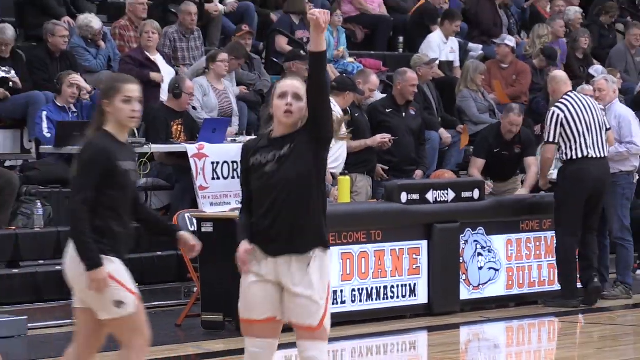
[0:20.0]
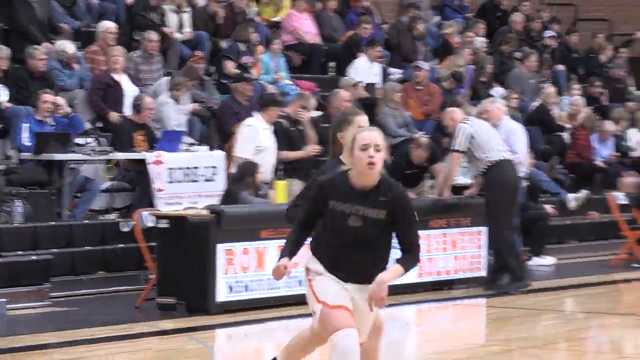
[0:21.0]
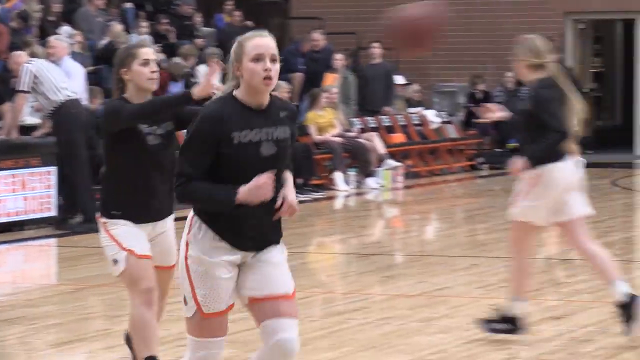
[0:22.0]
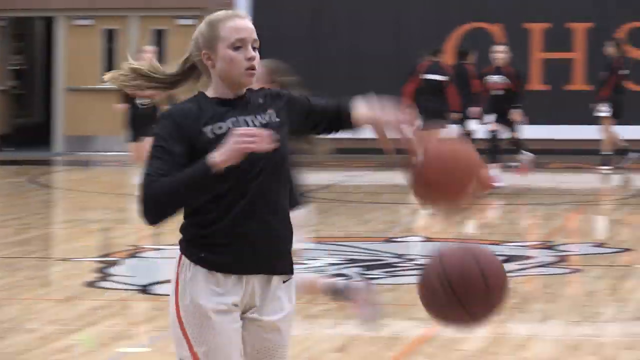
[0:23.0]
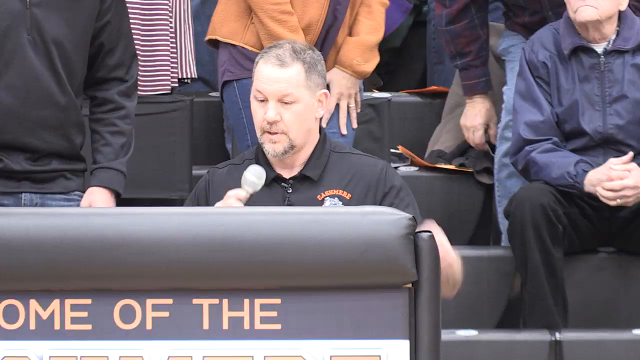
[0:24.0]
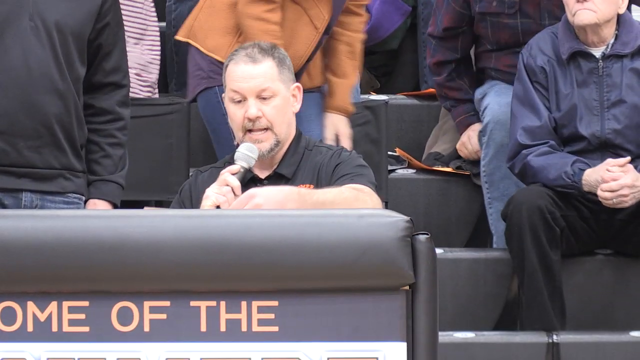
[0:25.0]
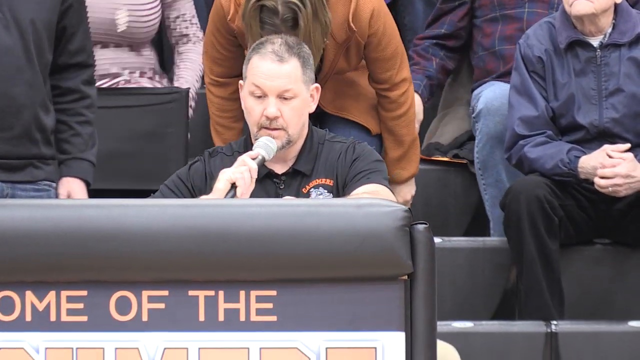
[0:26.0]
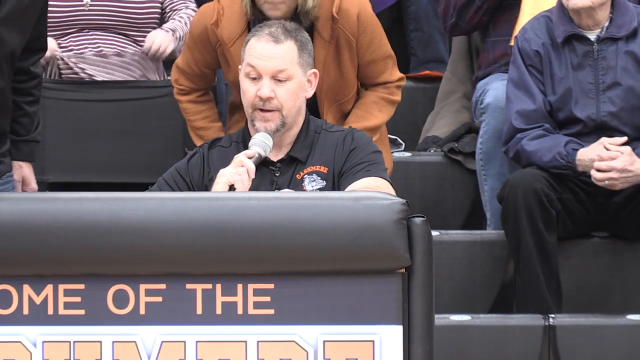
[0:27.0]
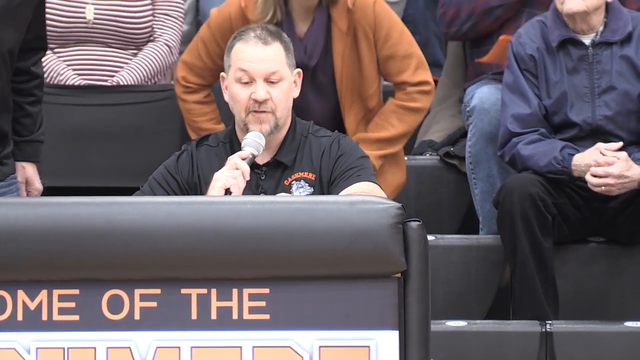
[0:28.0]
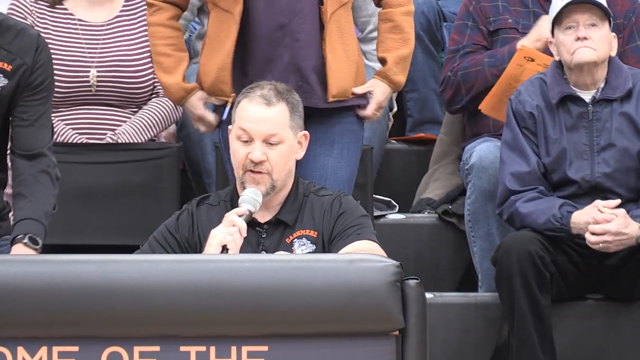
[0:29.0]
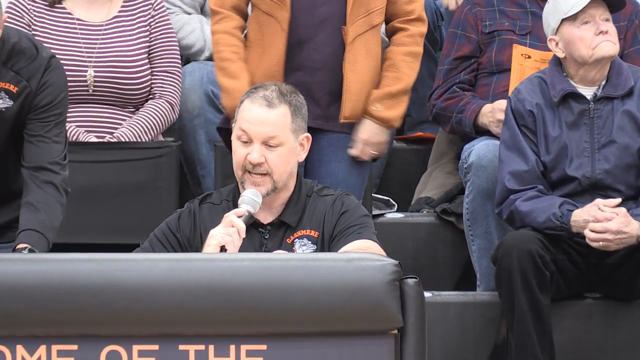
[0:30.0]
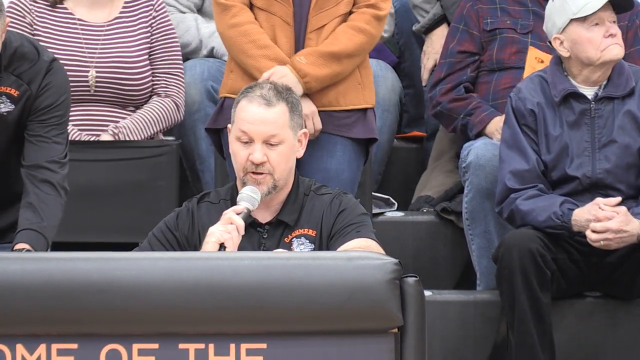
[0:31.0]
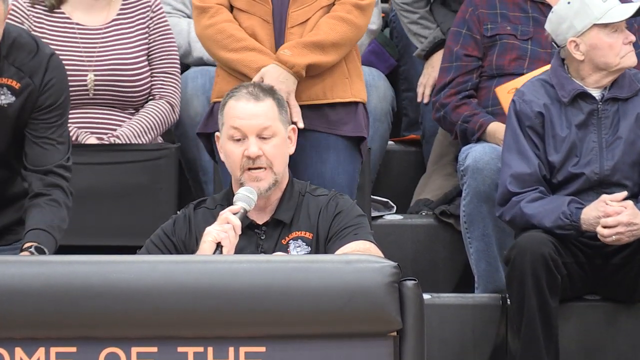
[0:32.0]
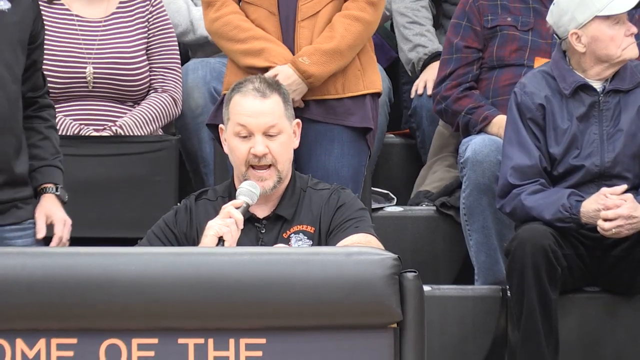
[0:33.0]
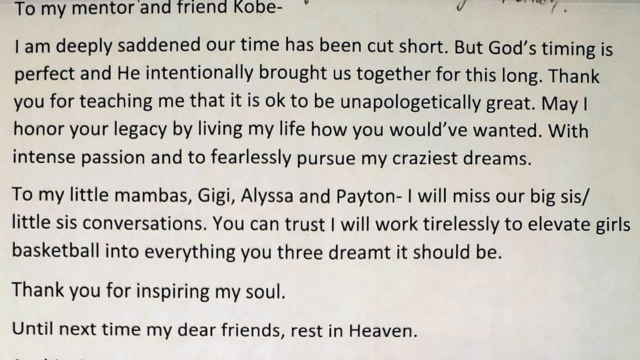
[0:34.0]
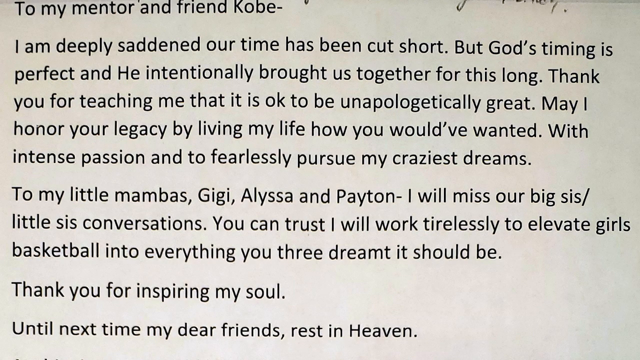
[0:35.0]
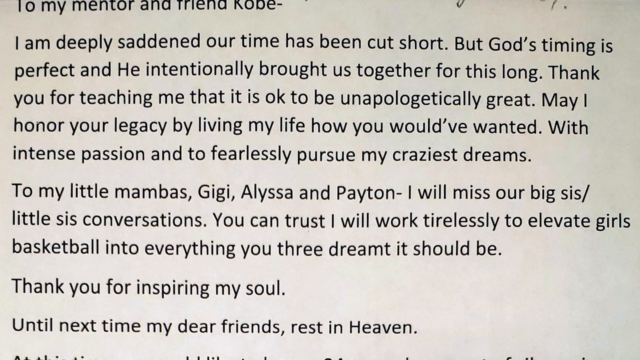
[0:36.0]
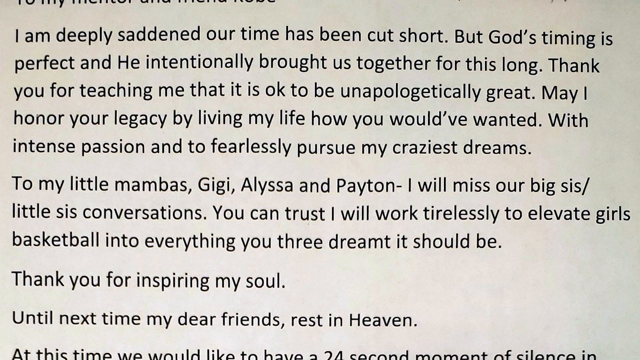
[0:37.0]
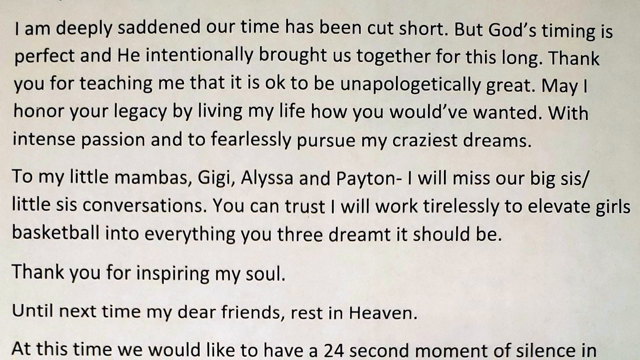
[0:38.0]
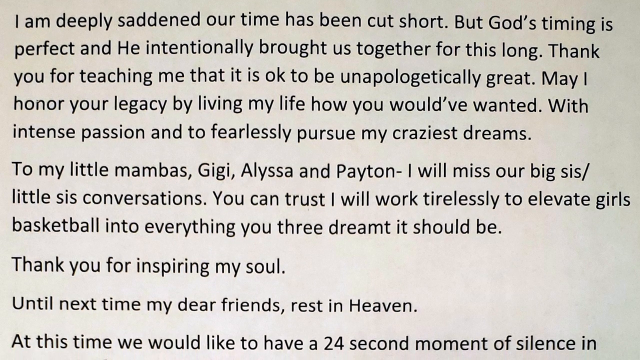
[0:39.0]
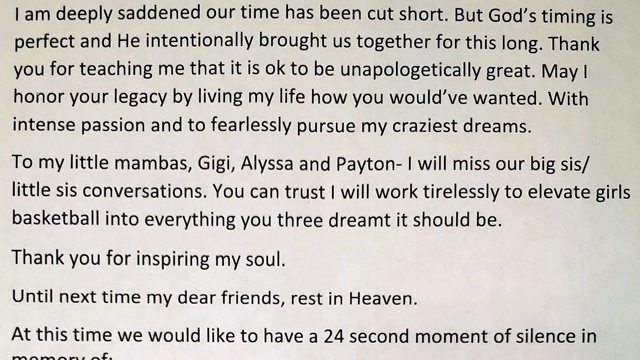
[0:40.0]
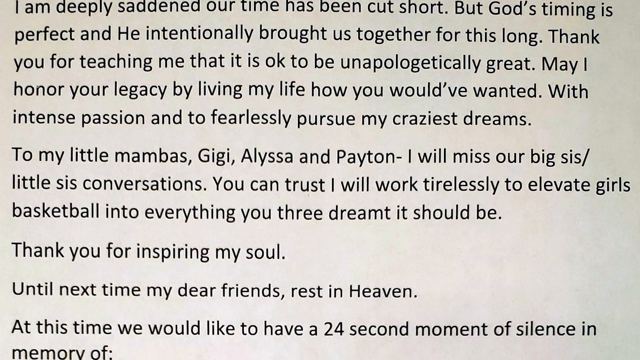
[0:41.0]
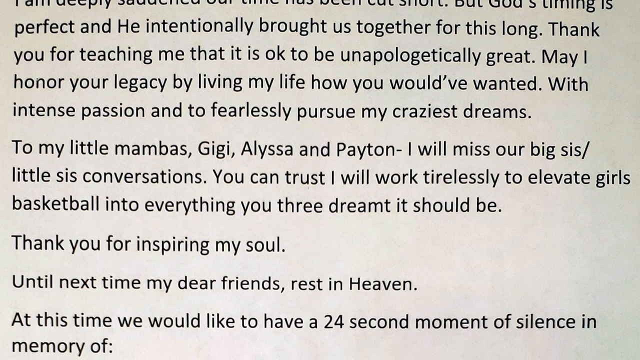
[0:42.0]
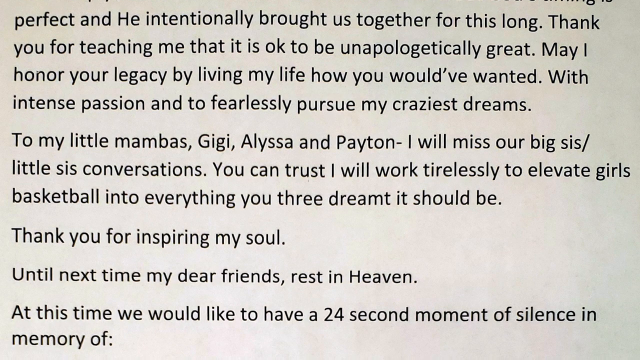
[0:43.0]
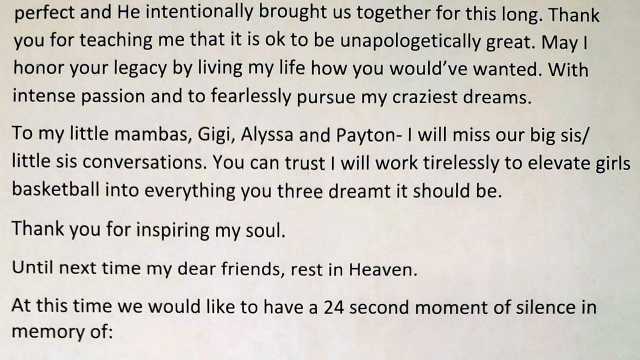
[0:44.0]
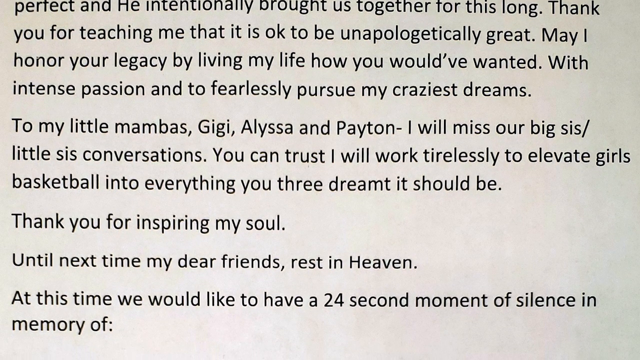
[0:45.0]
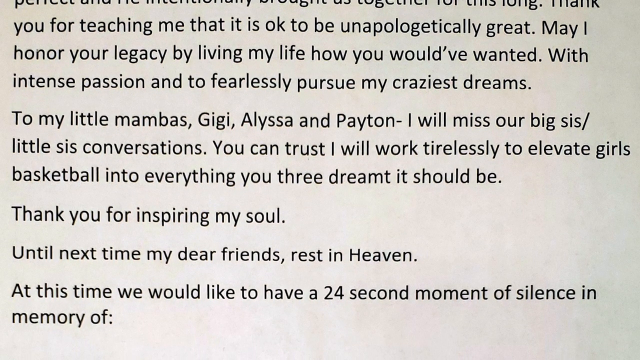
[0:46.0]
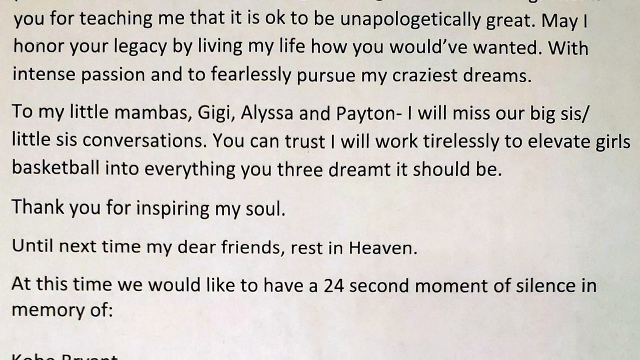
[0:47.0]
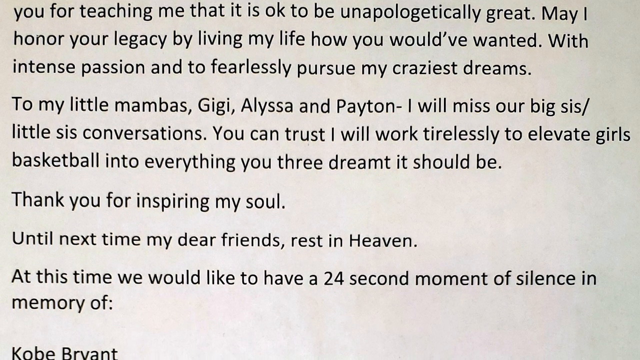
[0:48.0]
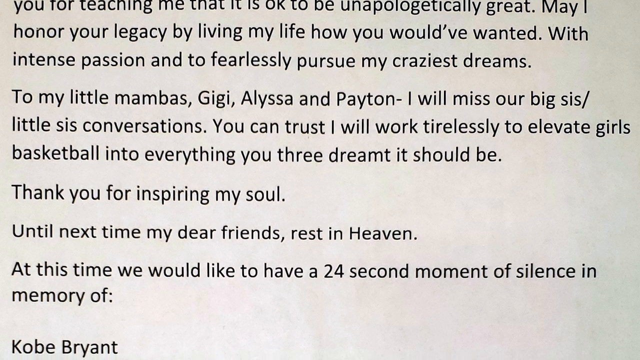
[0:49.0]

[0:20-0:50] The female player with long blonde hair in a ponytail has just shot the basketball and holds her left hand up in a follow-through. She runs toward the basket, catches the ball and throws it to her side. Several basketballs bounce around, and several of her teammates are in the background. A straight-on shot then shows an announcer, kind of on the sidelines behind kind of the center court: a white male with very short dark hair in a black t-shirt, holding a microphone right in front of his face. He speaks into the microphone while looking down at potentially a piece of paper in front of him, and some fans are moving around in the background. Next, a piece of paper with black text appears. The top reads "to my mentor and friend Kobe", followed by several paragraphs about time being cut short that also address his daughters, and the bottom says "thank you for inspiring my soul". The camera pans very slowly down the entire letter so the whole of it can be read.